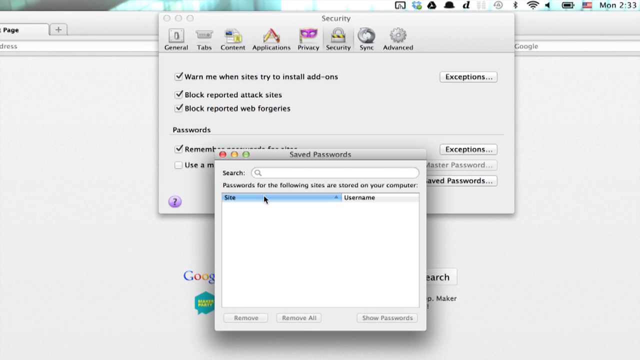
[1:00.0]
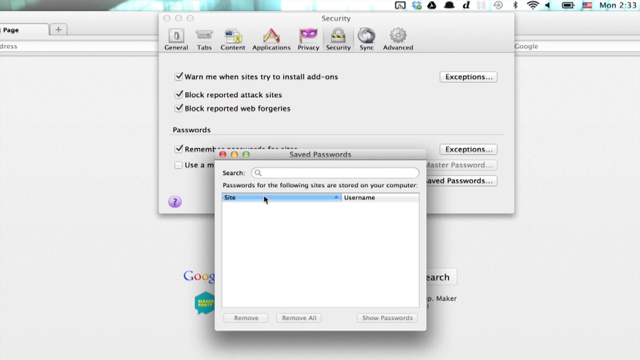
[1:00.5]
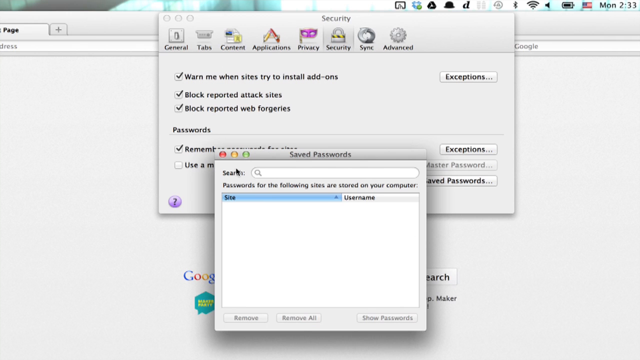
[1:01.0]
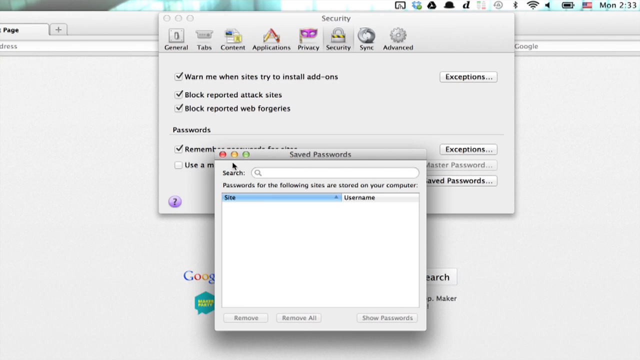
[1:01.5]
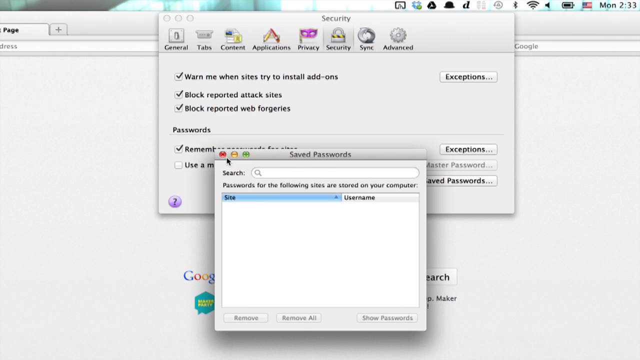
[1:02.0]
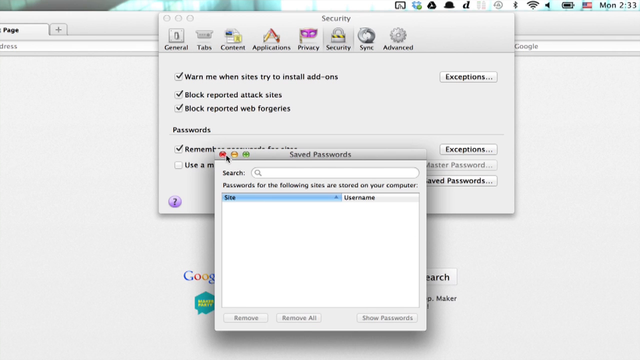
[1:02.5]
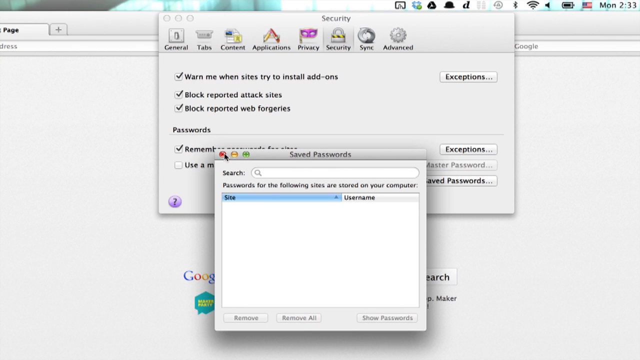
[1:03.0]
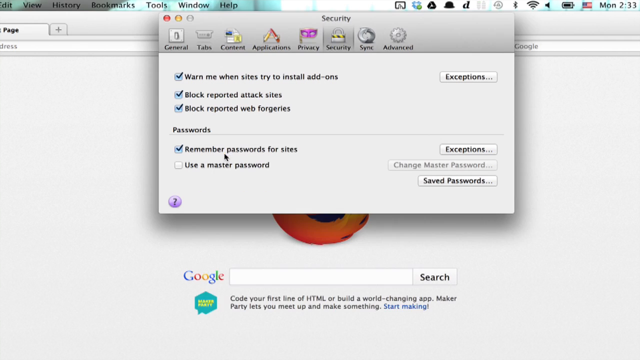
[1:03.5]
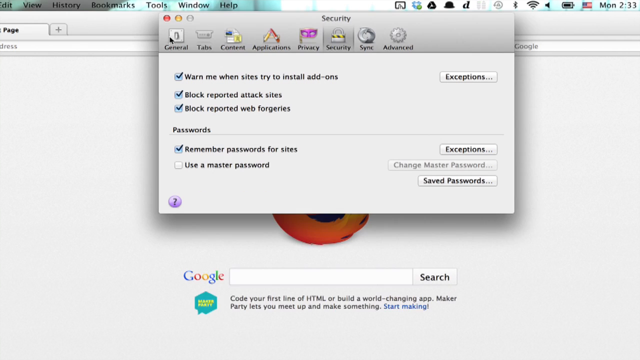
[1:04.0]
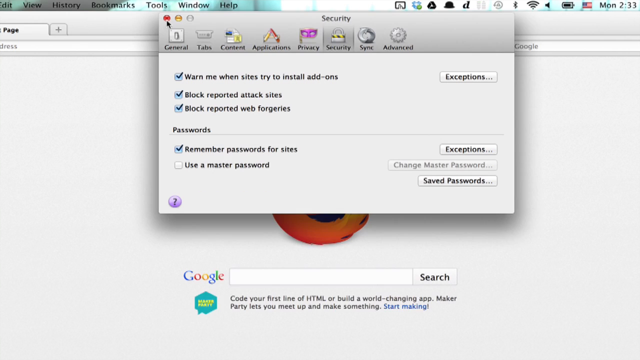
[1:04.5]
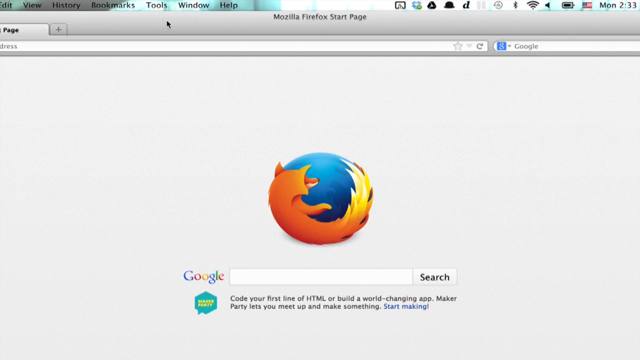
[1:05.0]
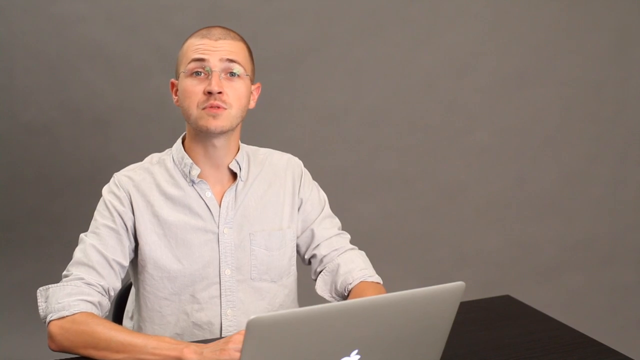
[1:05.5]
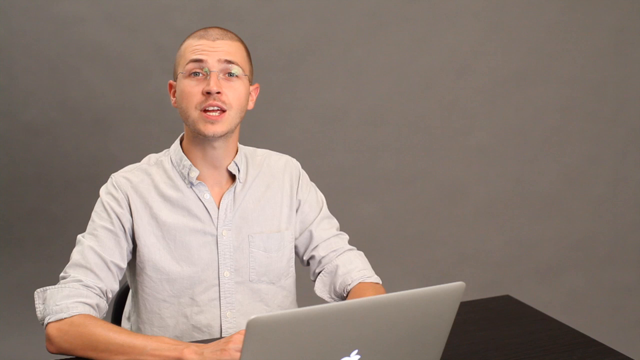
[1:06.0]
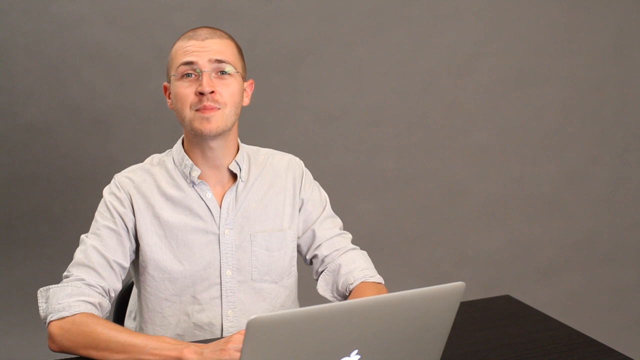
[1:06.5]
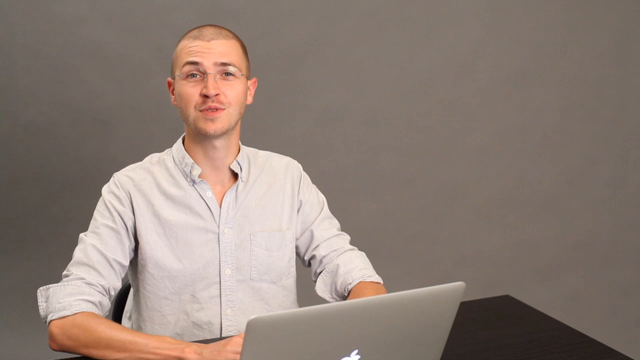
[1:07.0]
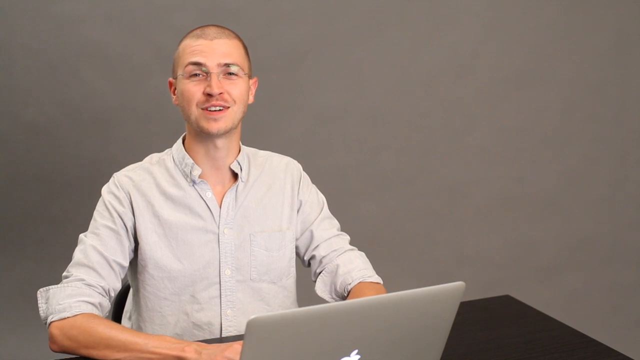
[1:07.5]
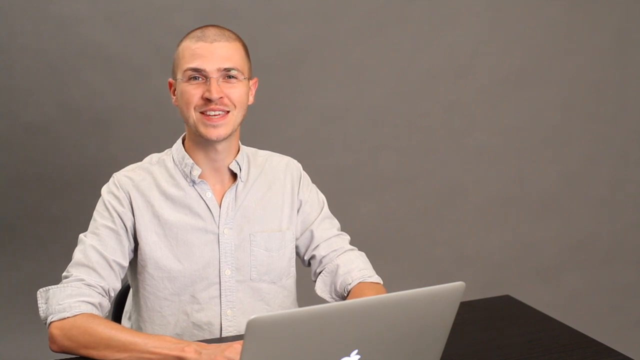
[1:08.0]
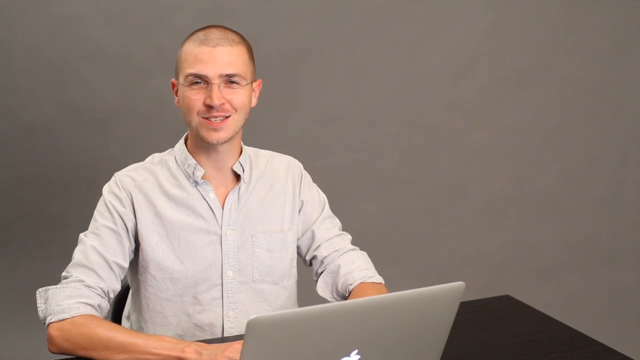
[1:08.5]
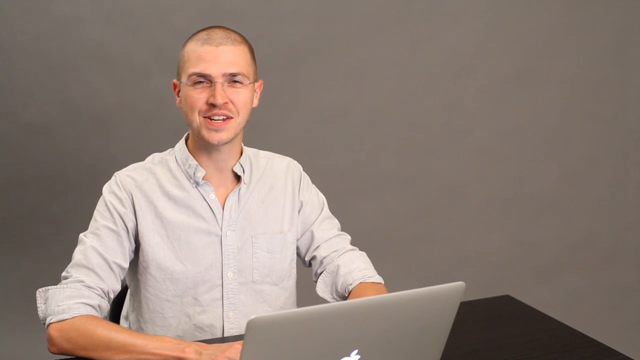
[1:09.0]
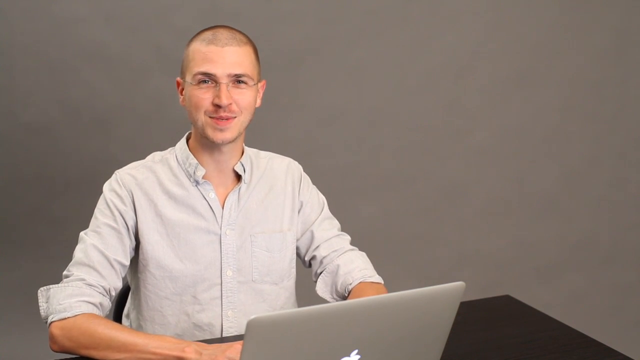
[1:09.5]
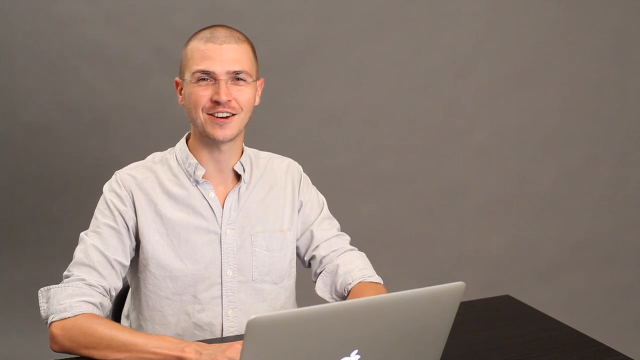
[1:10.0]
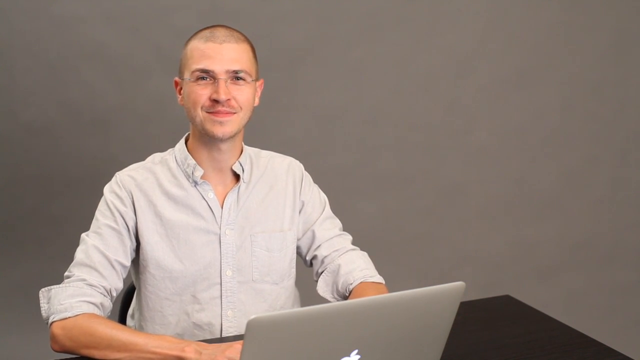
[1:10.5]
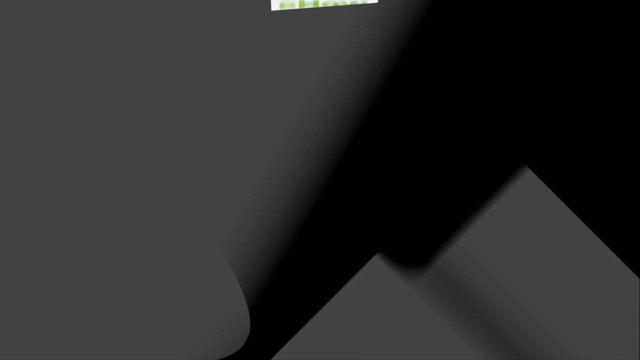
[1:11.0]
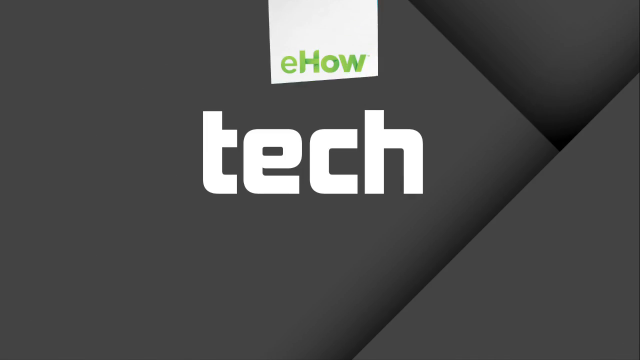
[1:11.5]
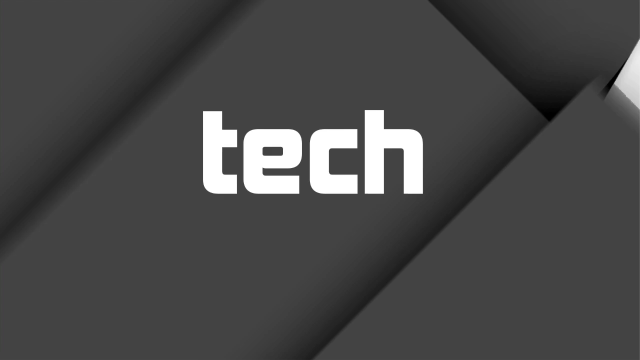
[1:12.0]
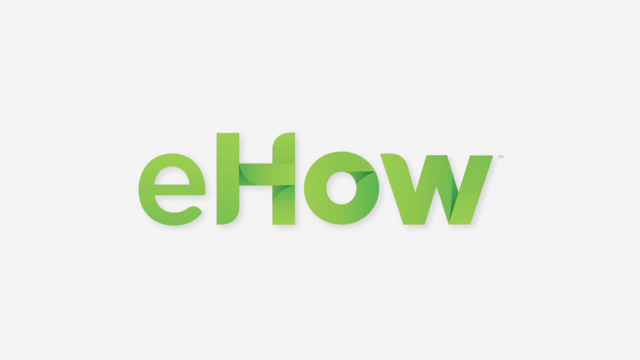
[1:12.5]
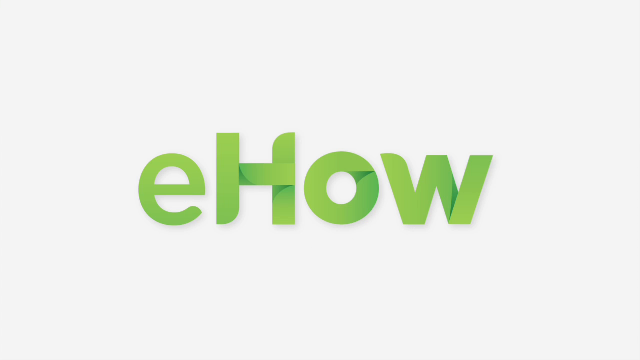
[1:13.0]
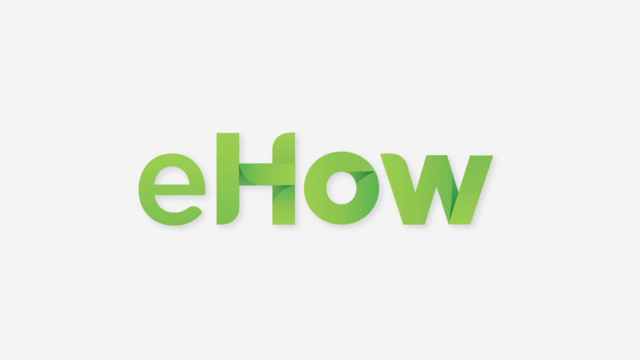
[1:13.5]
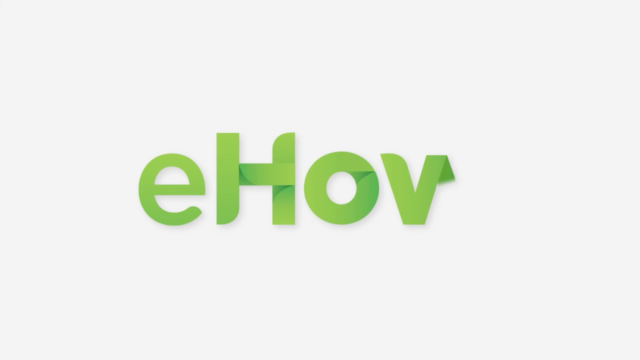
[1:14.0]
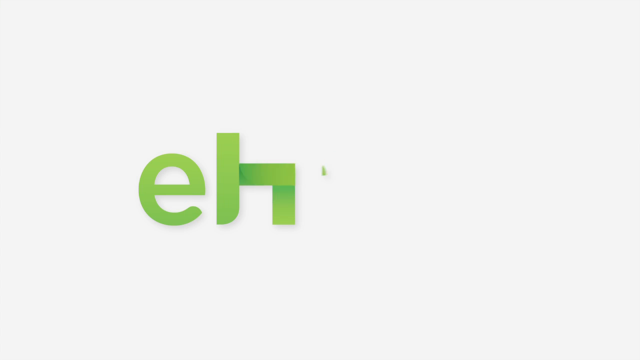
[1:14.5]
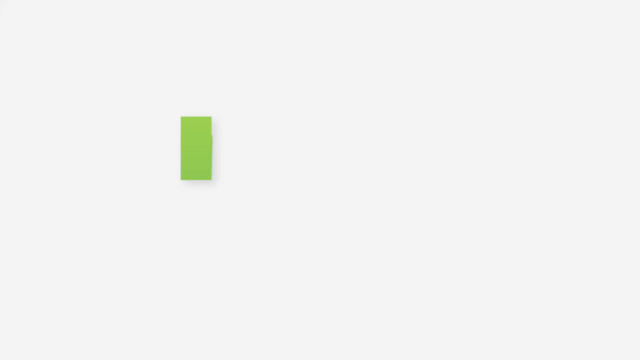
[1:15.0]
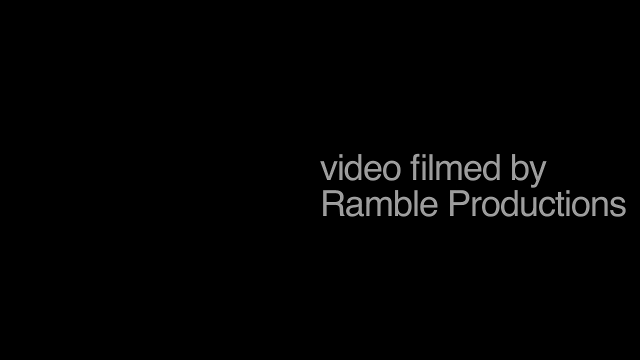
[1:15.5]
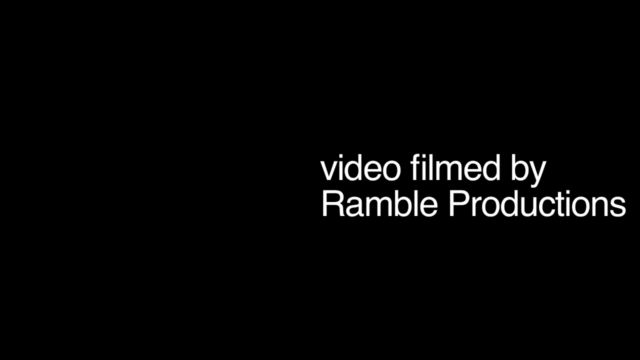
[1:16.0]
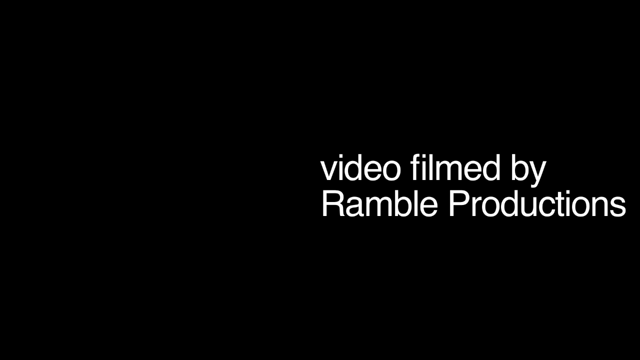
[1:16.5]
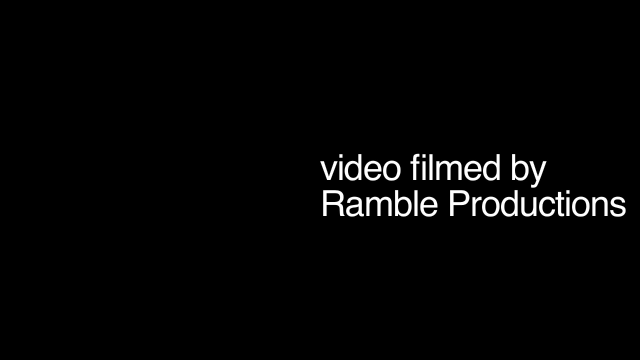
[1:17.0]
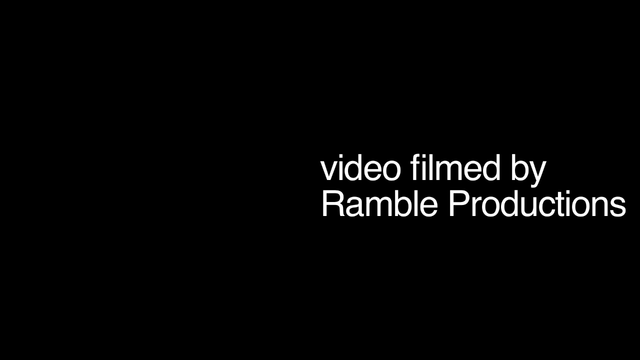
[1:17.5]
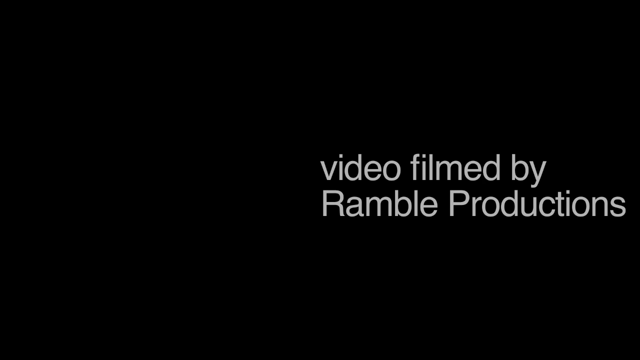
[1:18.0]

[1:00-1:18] The man is speaking and seems friendly and knowledgeable. He shows how to access saved passwords in case they have been forgotten. The video was filmed by a small independent studio.